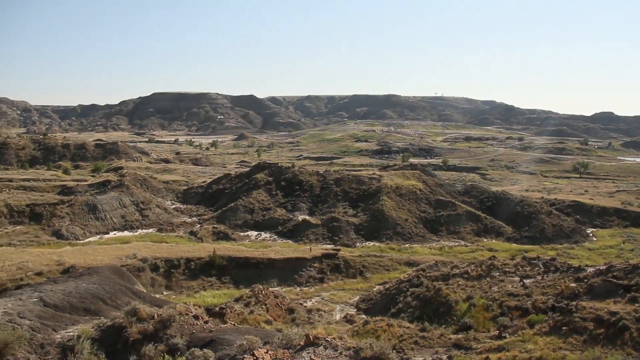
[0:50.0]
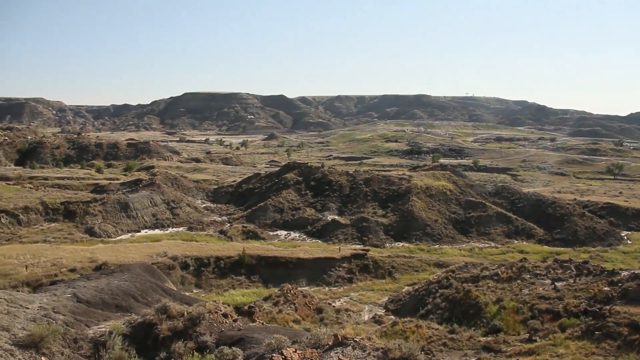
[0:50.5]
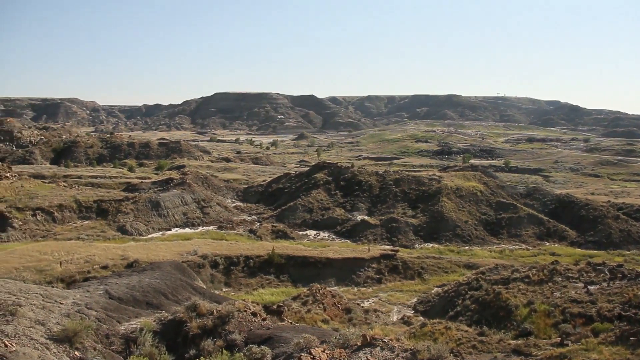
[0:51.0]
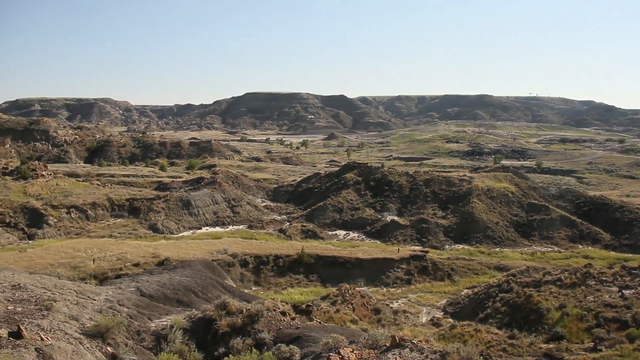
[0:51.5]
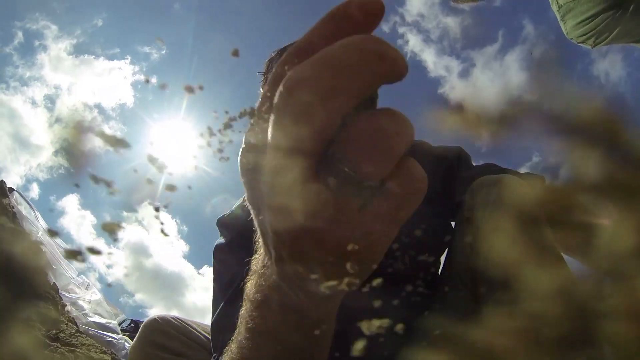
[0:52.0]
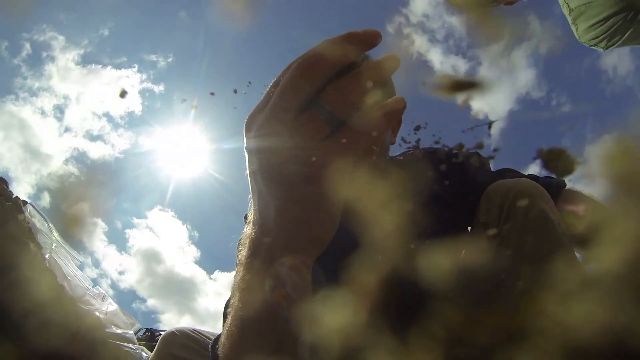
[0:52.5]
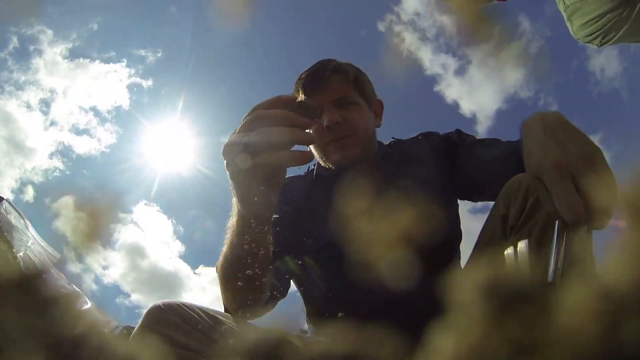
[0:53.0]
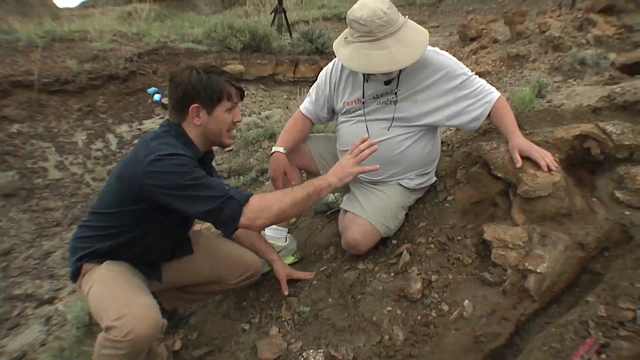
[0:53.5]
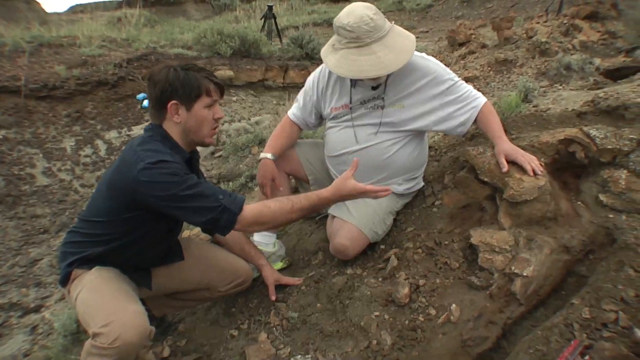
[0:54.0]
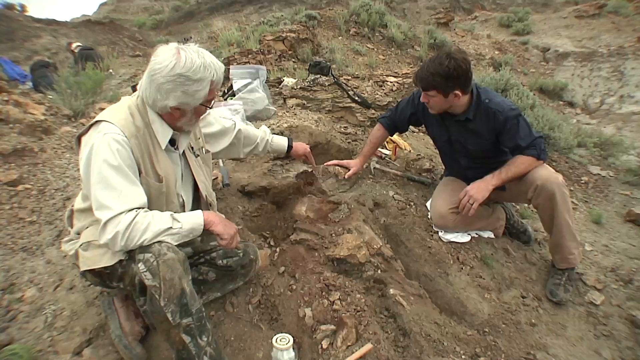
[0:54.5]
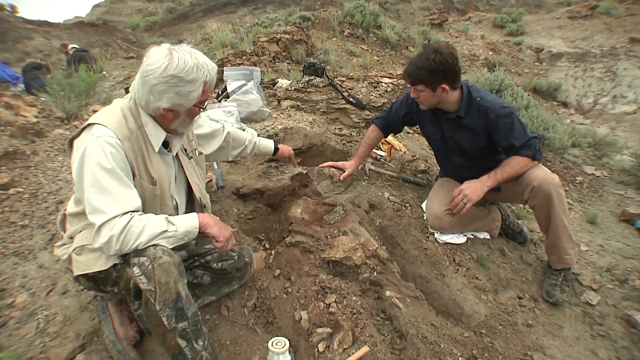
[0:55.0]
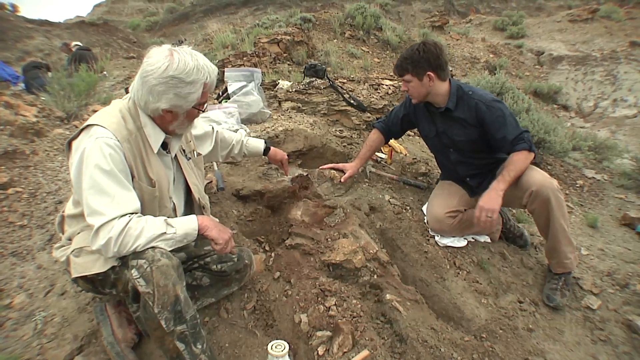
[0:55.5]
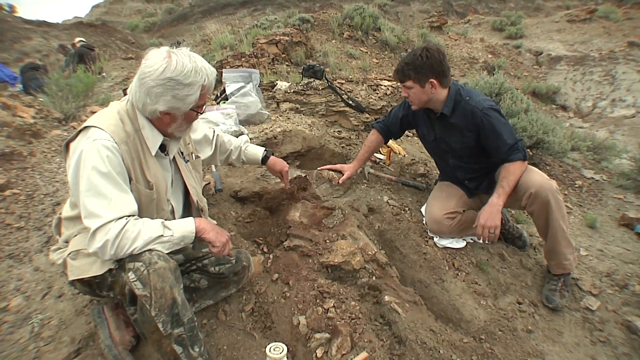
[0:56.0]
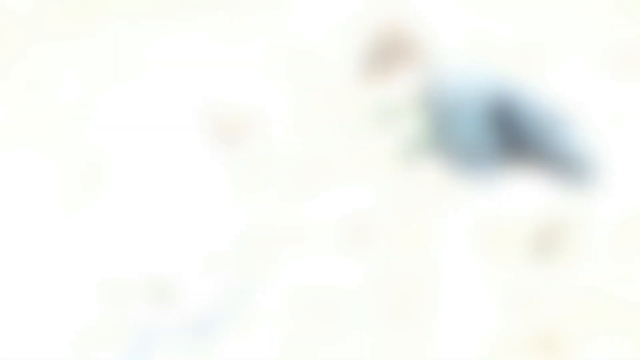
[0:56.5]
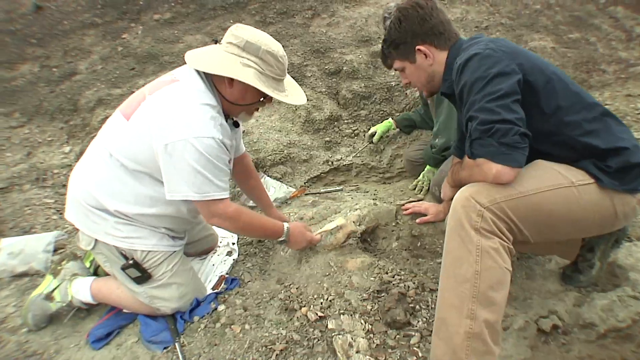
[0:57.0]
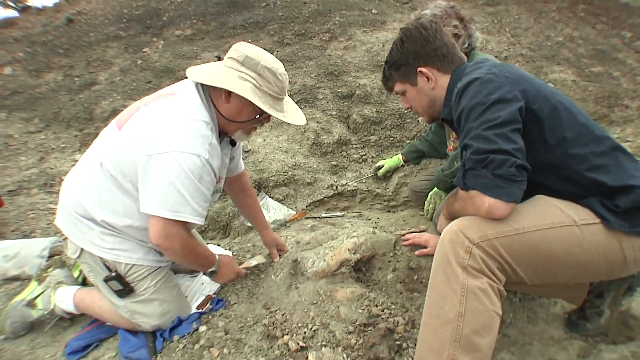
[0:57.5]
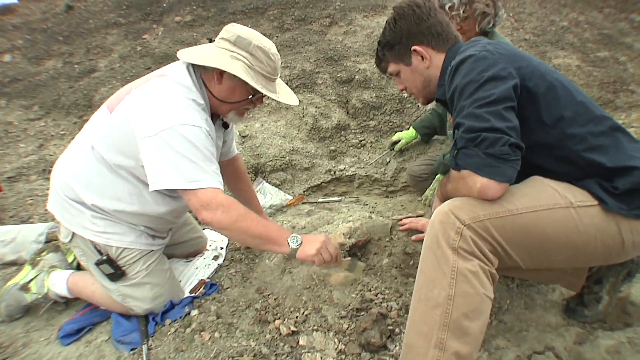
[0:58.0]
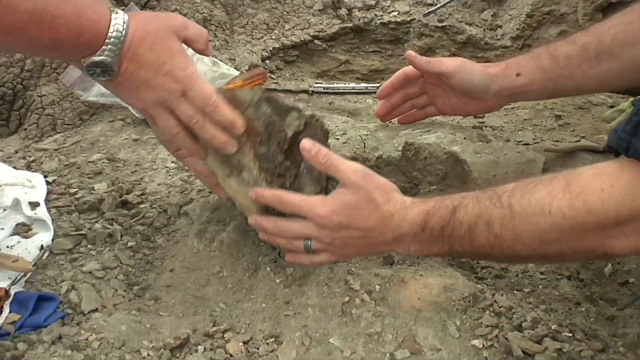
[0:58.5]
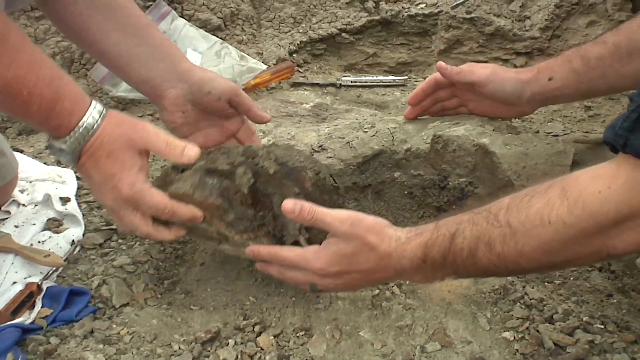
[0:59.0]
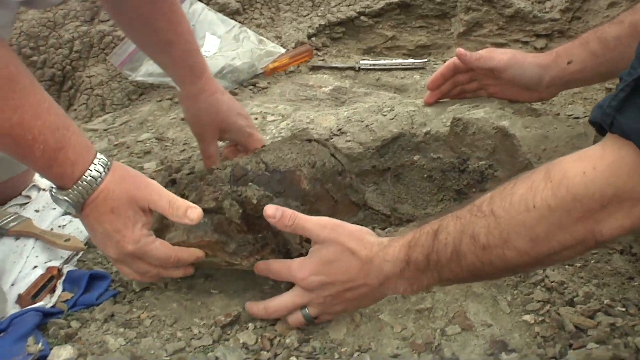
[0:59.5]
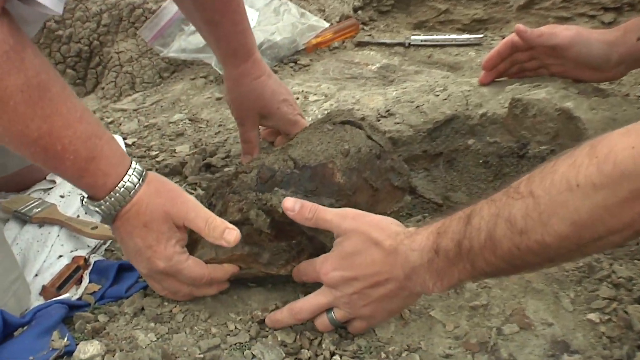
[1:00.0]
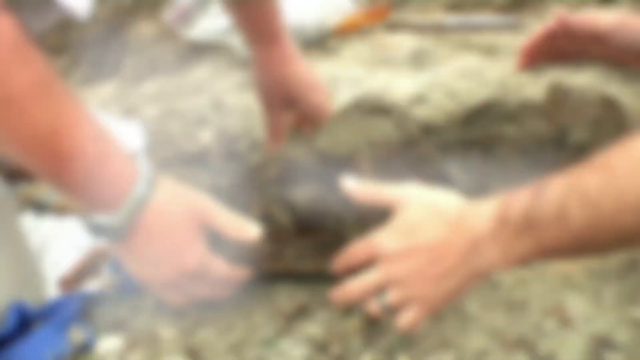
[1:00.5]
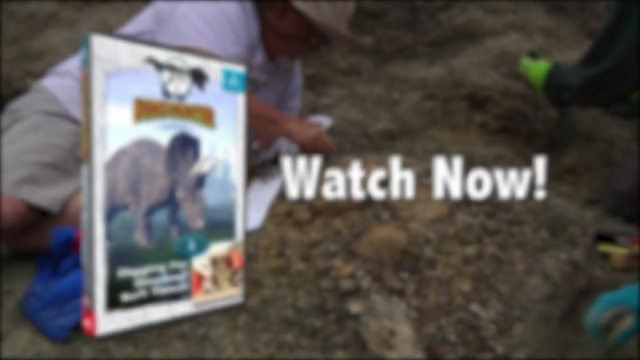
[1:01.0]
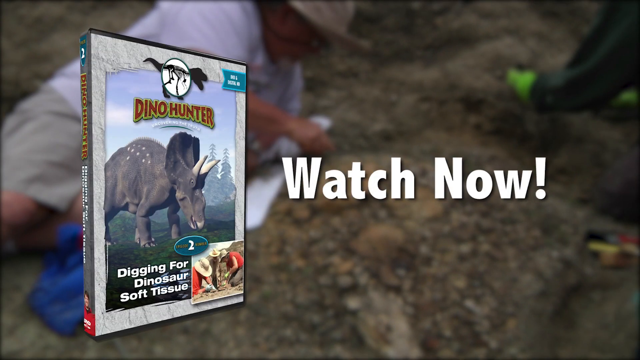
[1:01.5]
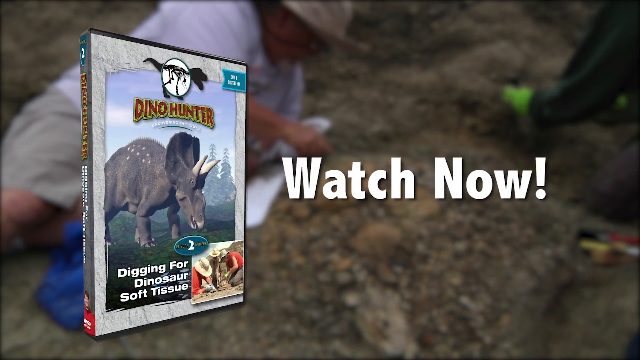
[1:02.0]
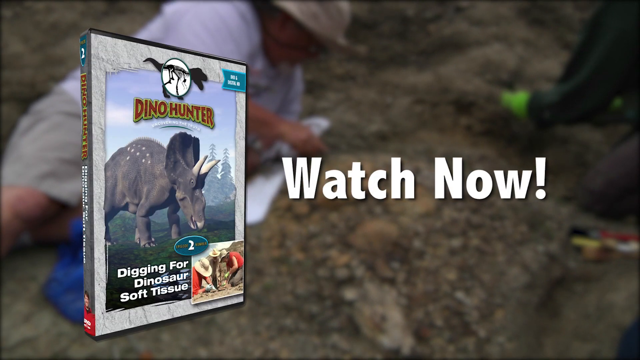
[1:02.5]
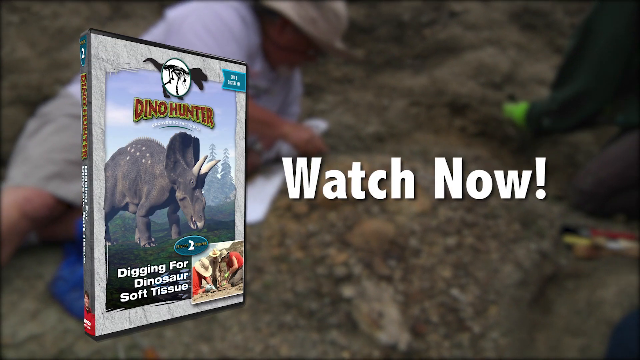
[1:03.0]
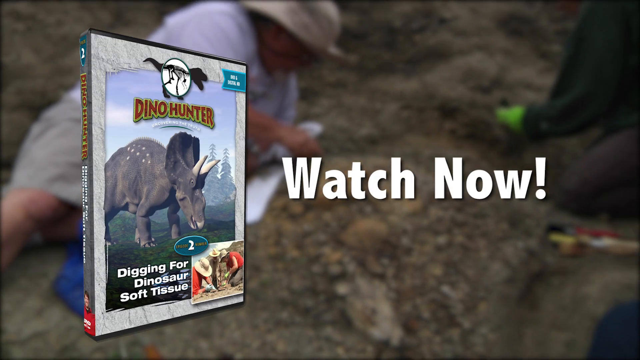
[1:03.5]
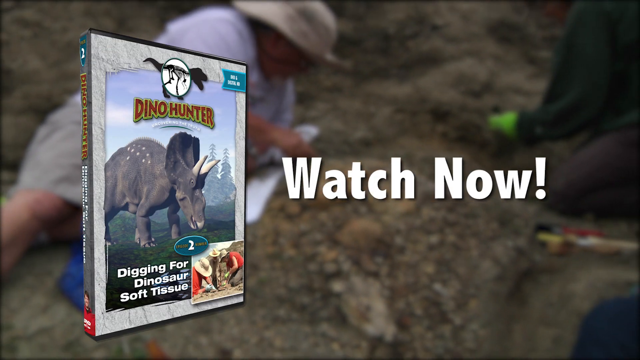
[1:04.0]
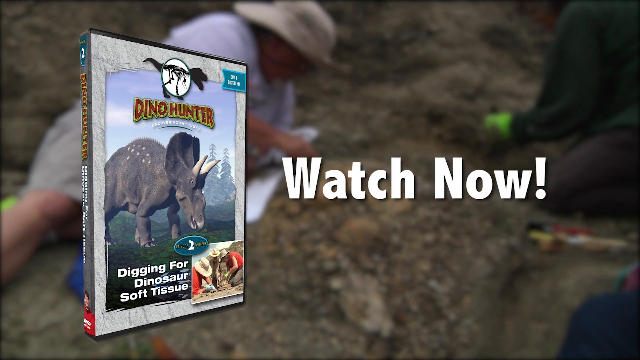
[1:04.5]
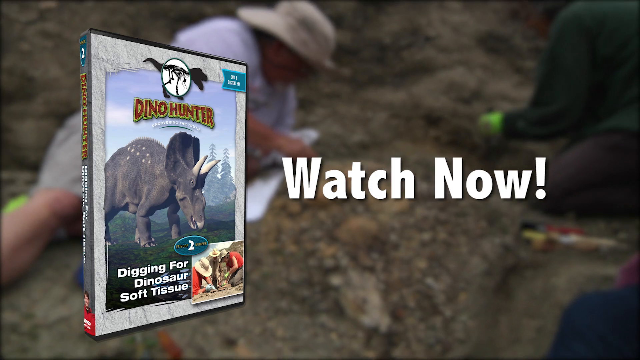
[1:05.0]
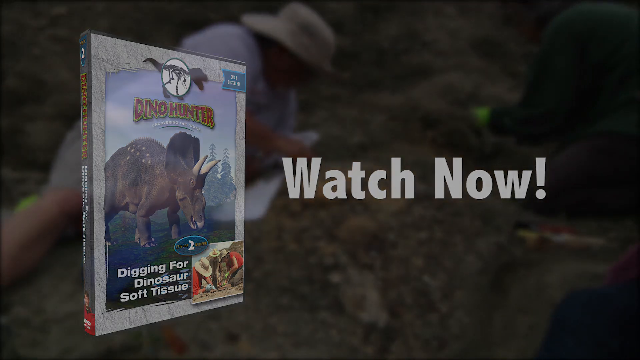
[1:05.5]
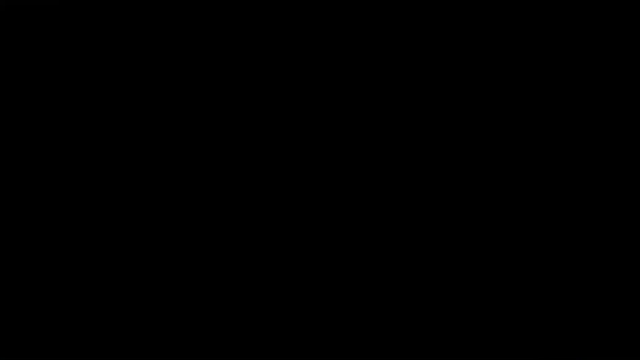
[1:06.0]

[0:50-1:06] A broad shot shows terrain that looks like low hills covered with green vegetation. The camera then looks up at someone who is dropping dirt on something. Two men sit on the ground in a dry, rocky area. The one on the left gestures forward with his right hand; he wears a blue shirt turned up at the elbows and khaki pants. The man sitting behind him wears a white hat, a loose white t-shirt and white shorts. The same man in the blue shirt then sits with another man, this time with the man in the blue shirt on the right; the man on the left has gray hair, wears a beige jacket and a long-sleeve white shirt, and gestures with his left hand toward some rocks on the ground. In another view, the man in the blue shirt kneels on the ground, watching as a man wearing a white hat, white shirt and white shorts scrapes away dirt from the ground. A close-up shows their hands as they pull a large rock or fossil from the ground. The video ends with a graphic showing the front of a DVD with "Dino Hunter" on the left and "Watch Now" written on the right.